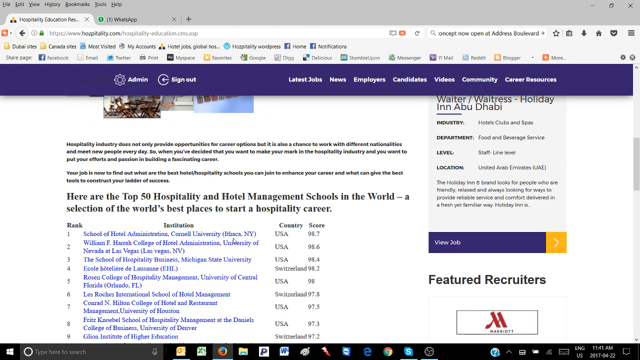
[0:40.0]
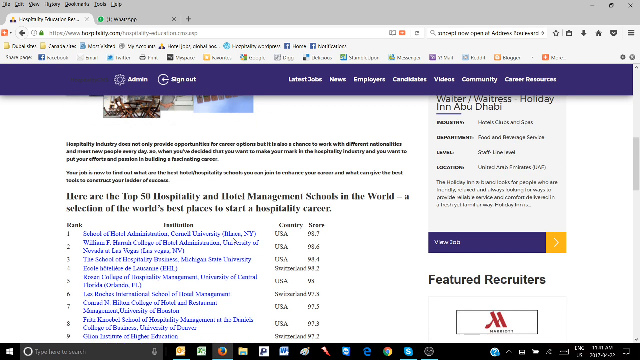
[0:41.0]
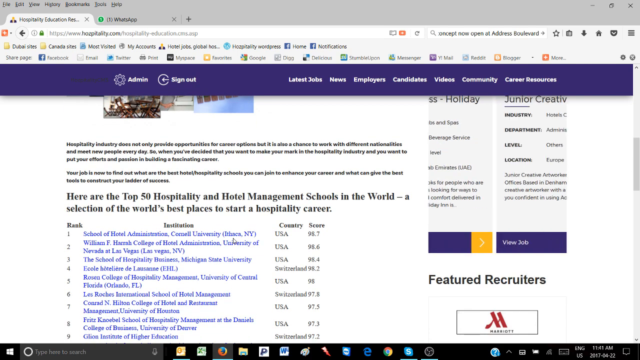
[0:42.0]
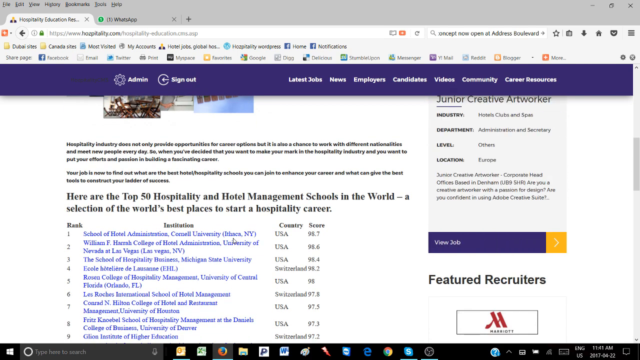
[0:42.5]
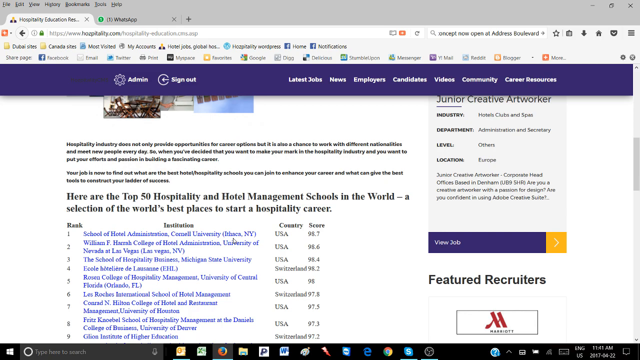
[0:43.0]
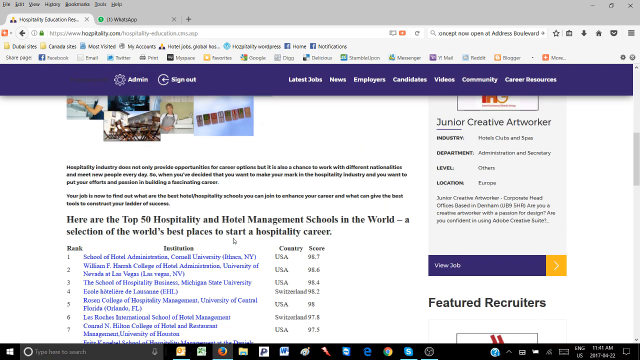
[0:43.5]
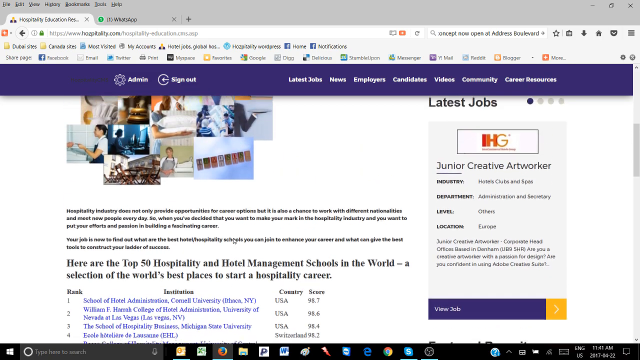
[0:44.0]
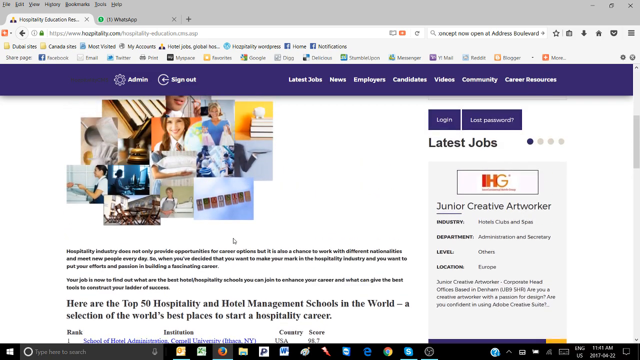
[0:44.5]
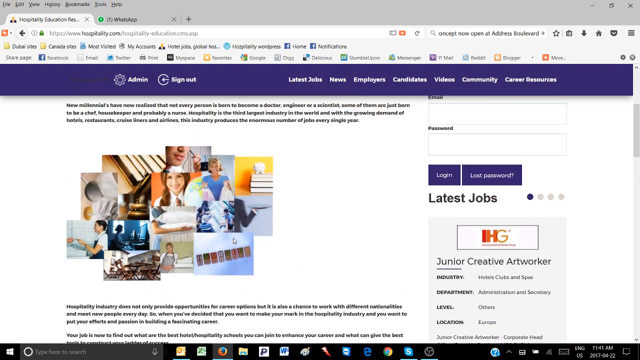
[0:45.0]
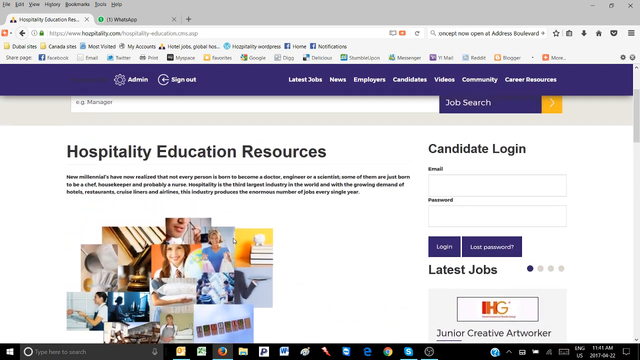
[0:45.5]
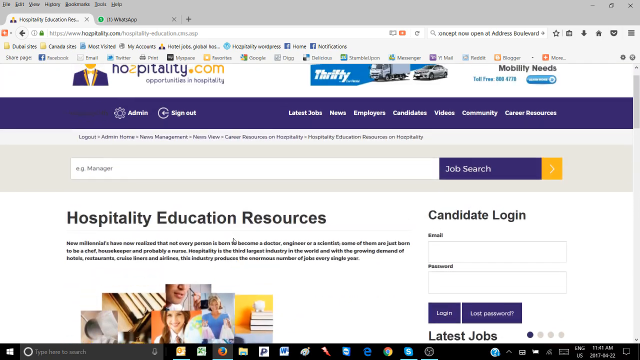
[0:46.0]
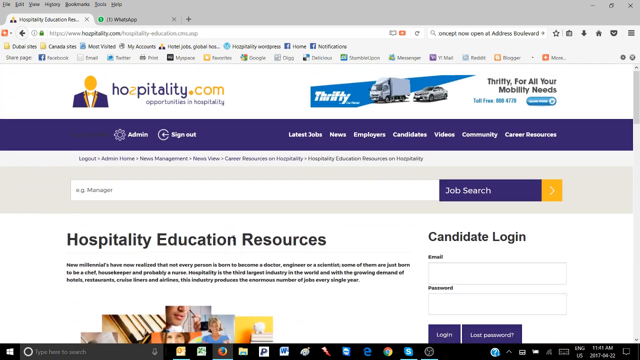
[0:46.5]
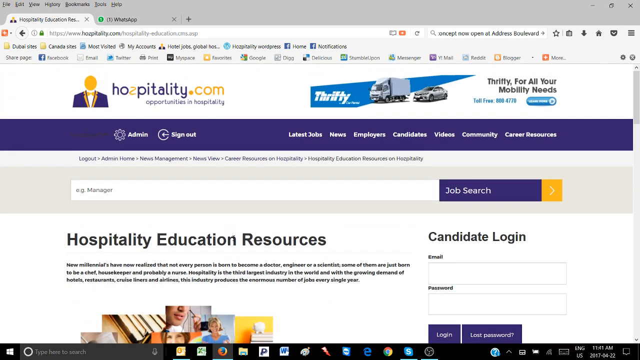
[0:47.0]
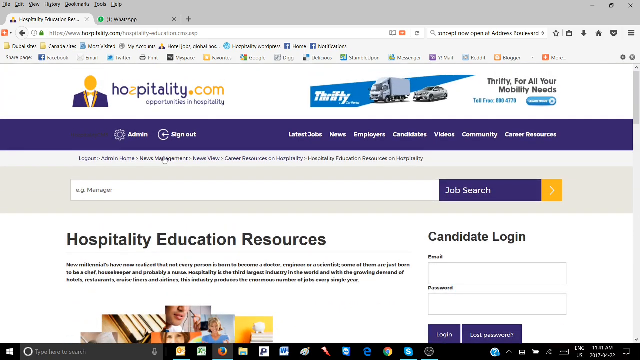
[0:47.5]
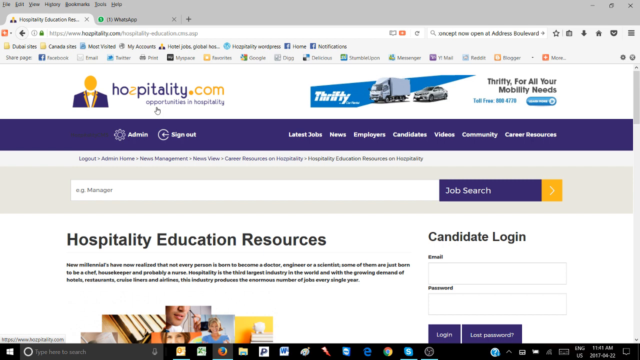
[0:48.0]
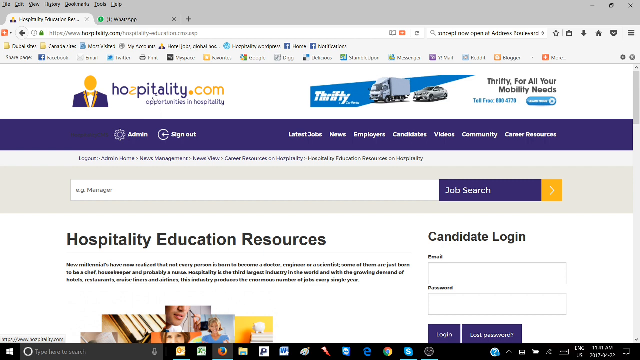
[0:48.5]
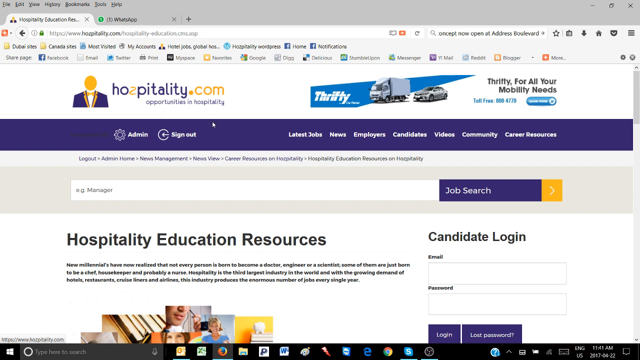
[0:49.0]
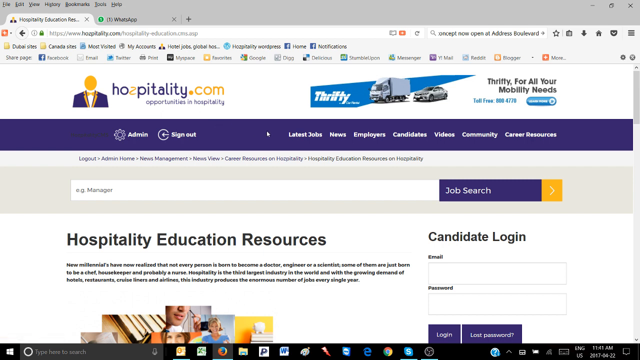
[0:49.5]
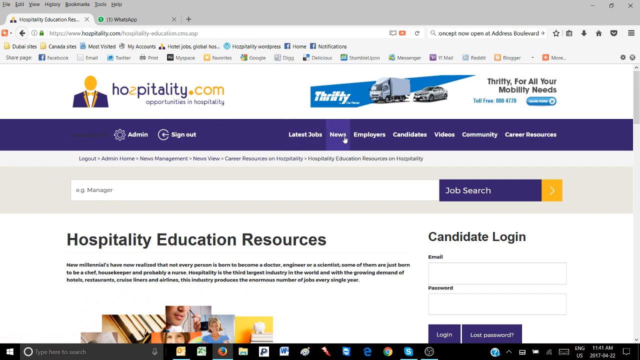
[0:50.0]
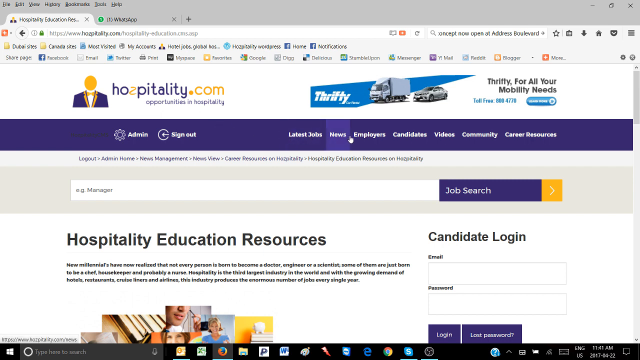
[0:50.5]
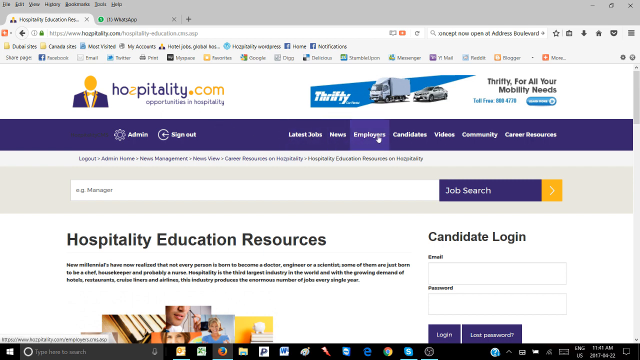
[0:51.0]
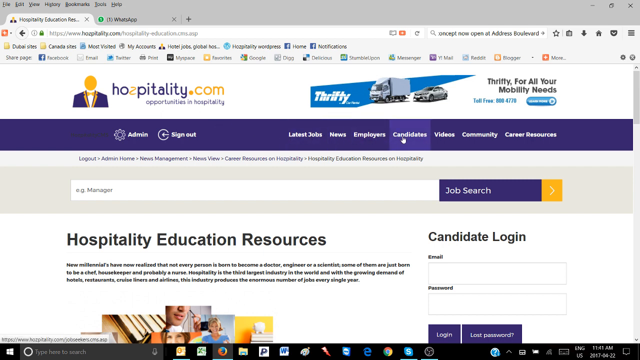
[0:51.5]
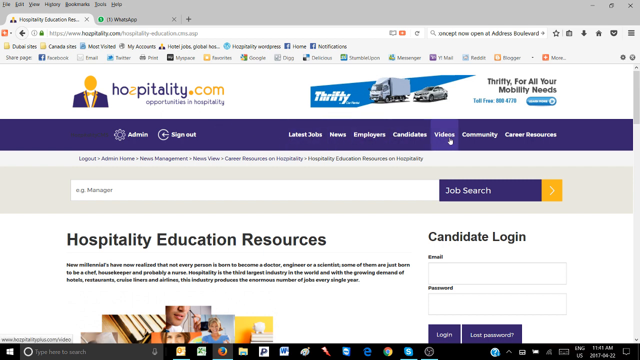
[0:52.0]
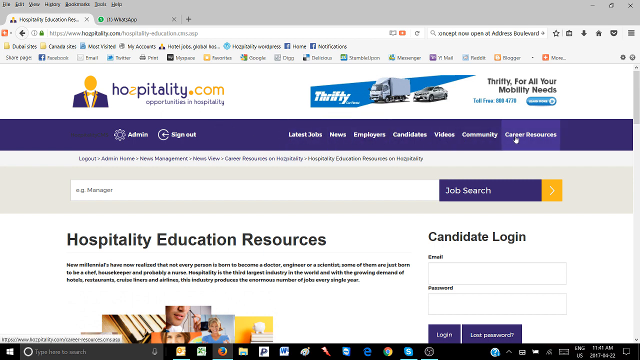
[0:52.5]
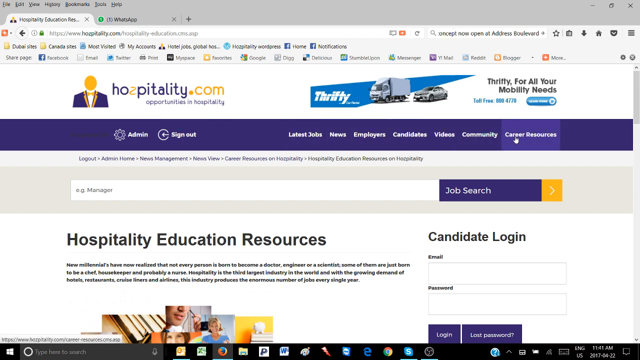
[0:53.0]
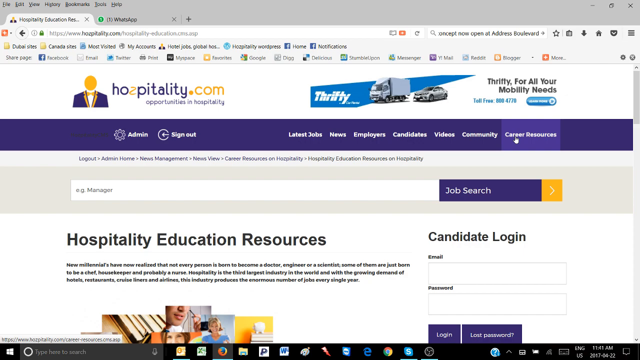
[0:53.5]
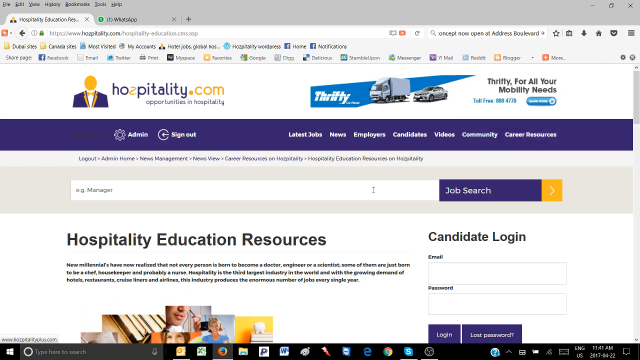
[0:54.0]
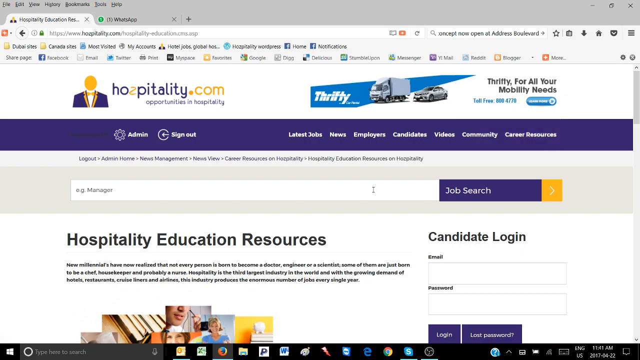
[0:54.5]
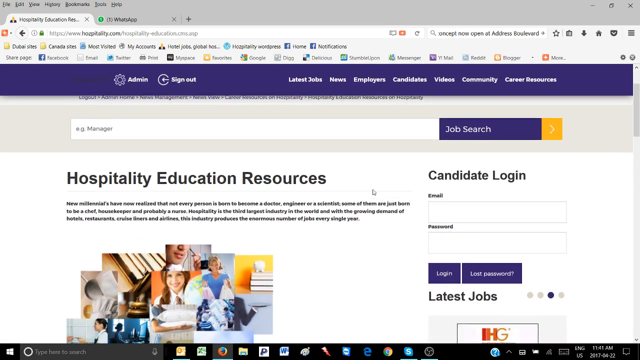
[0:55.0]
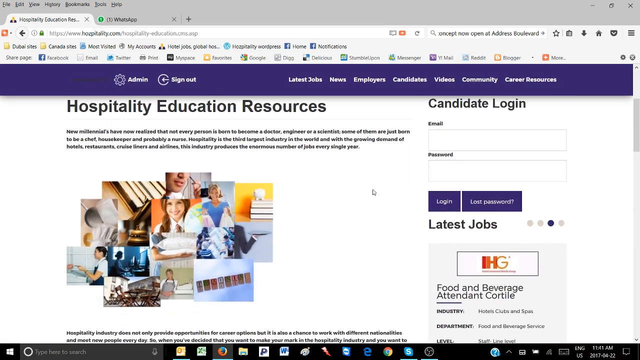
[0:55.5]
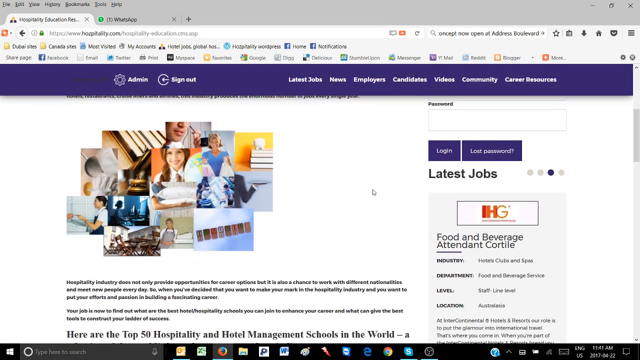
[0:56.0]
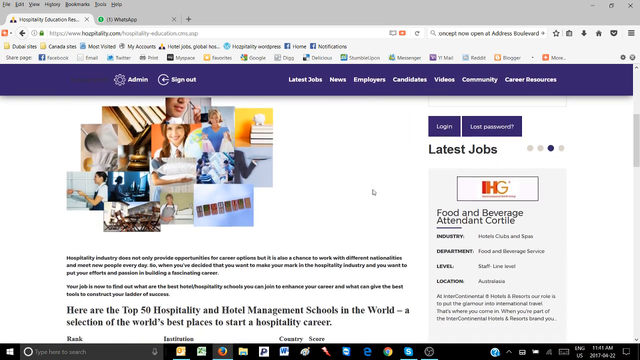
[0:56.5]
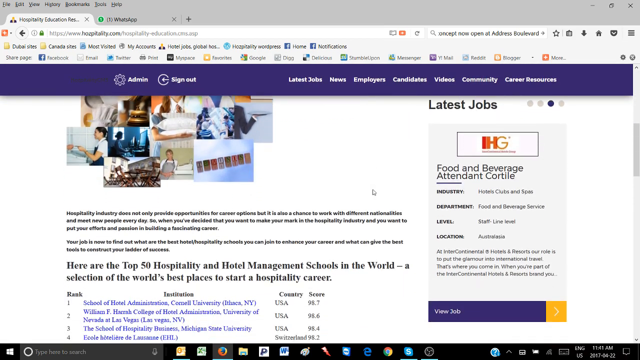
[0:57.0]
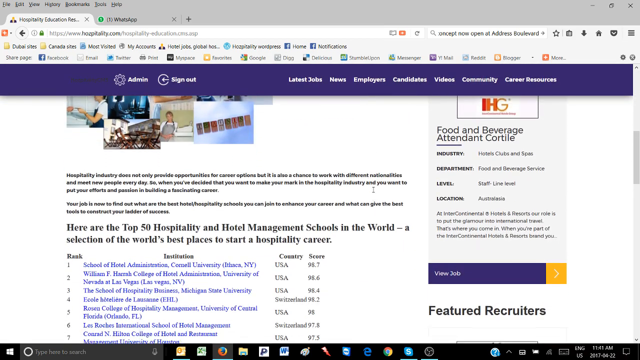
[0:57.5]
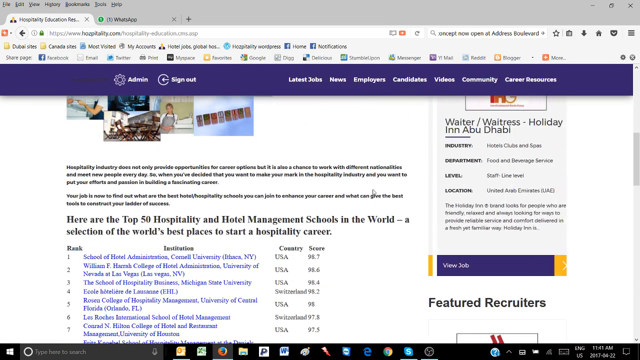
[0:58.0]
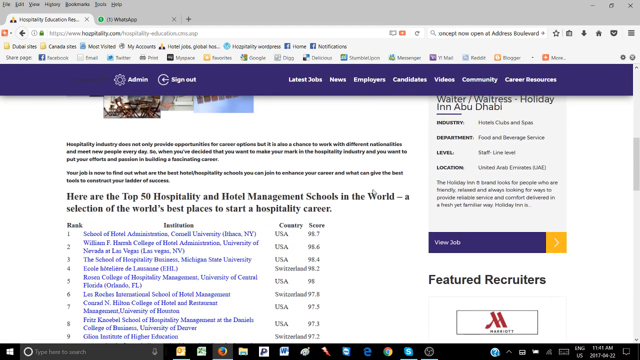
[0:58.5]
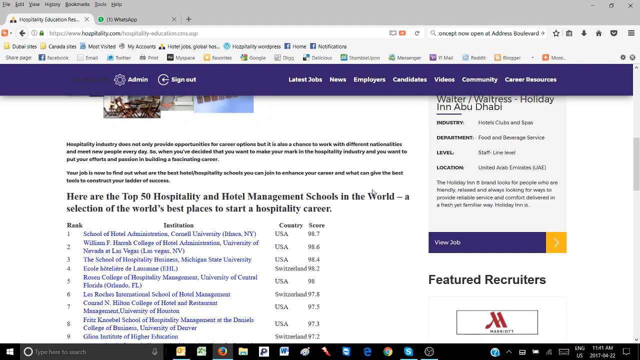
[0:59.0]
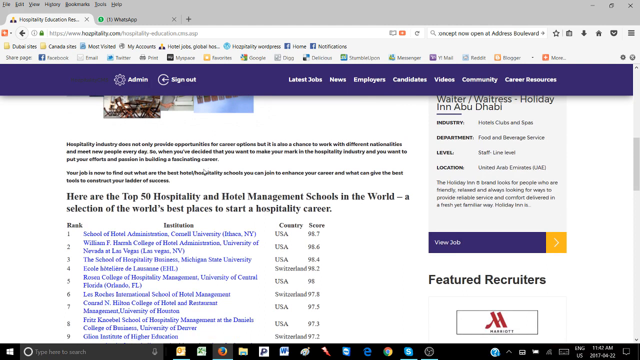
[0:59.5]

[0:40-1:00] The page has multiple hyperlinks on the left side, while on the right side a small box continues rolling from right to left. Above that box is a candidate login area with fields for email and password. The screen scrolls from the top down to the bottom. The cursor moves up to a menu of clickable areas: latest jobs, news, employees, candidates, videos, community and career resources. The hand cursor hovers over candidates, then moves over to career resources. It comes down to the blue hyperlinks, which are clickable and show the country each one is in, and the page scrolls back up from the bottom to the top. At the very top is a toolbar with admin and sign out. Text reads "here are the top 50 hospitality and hotel management schools in the world".